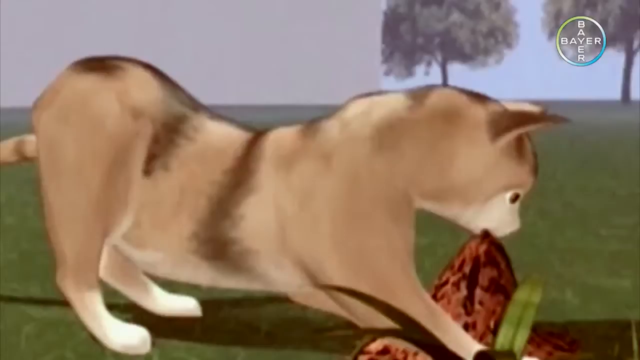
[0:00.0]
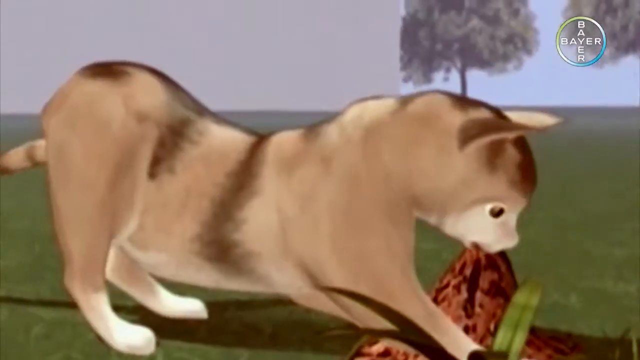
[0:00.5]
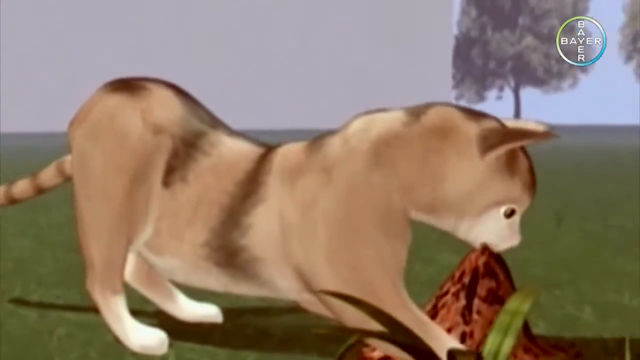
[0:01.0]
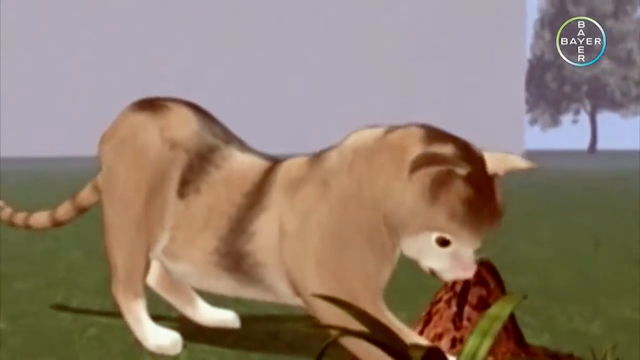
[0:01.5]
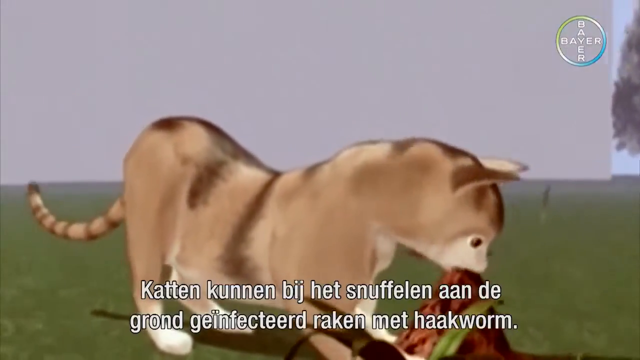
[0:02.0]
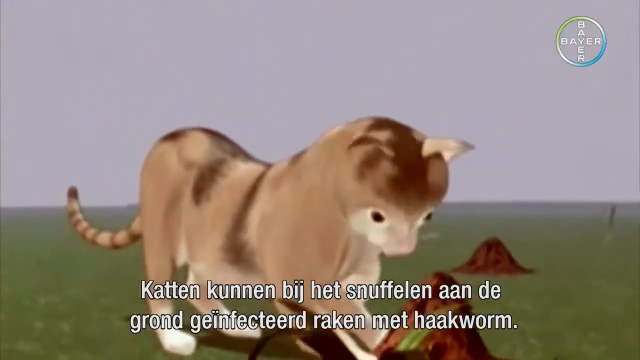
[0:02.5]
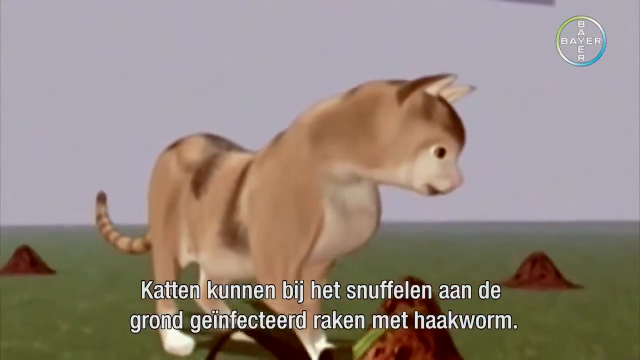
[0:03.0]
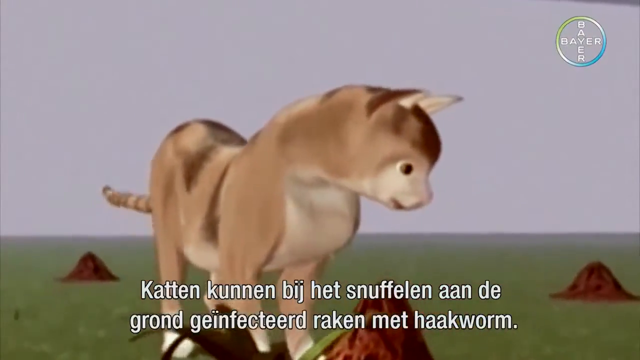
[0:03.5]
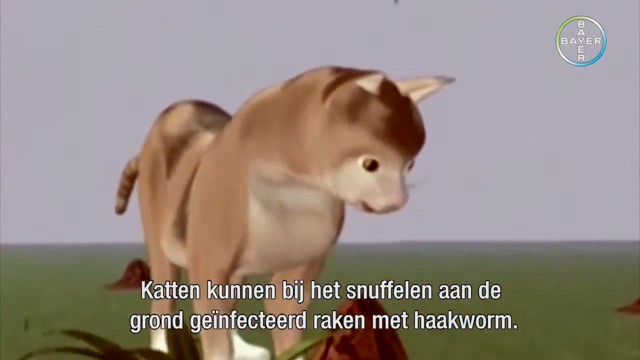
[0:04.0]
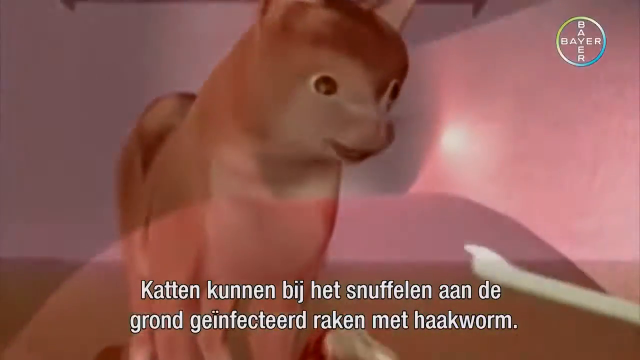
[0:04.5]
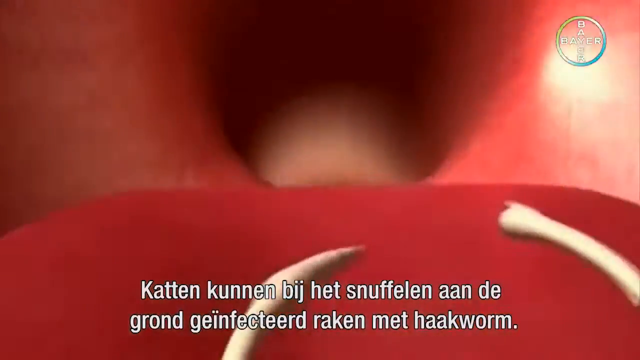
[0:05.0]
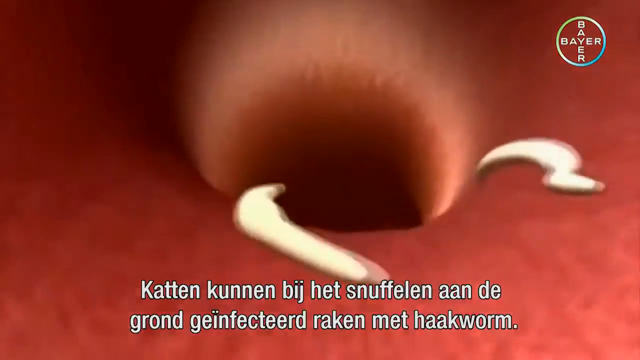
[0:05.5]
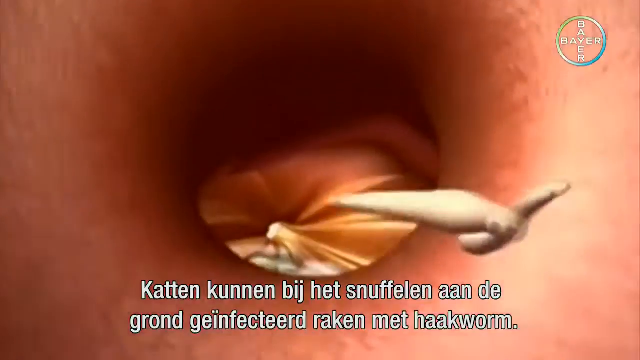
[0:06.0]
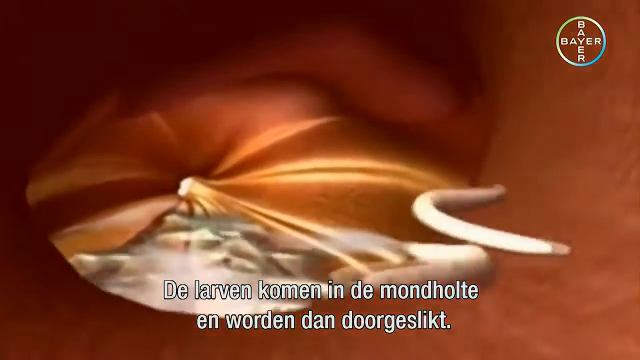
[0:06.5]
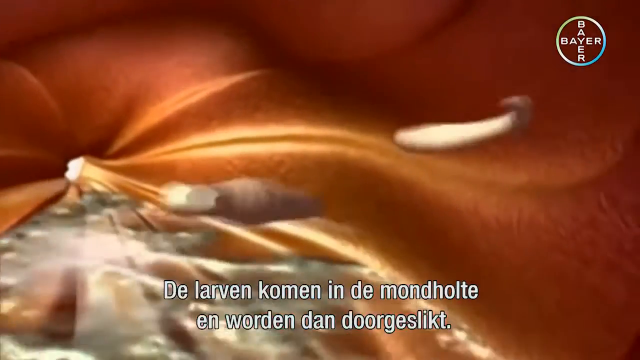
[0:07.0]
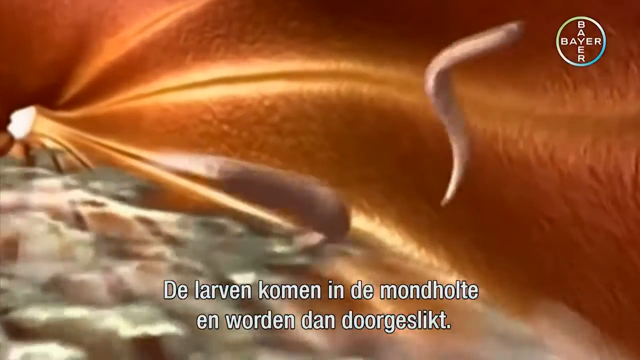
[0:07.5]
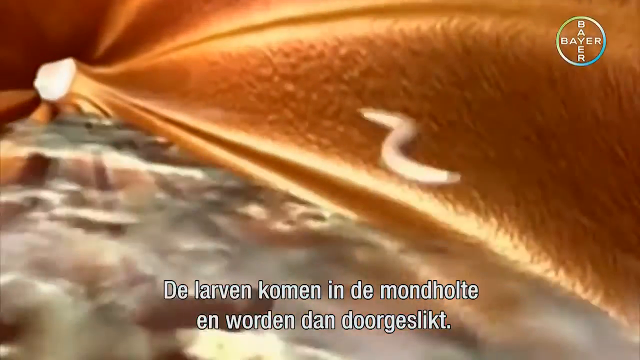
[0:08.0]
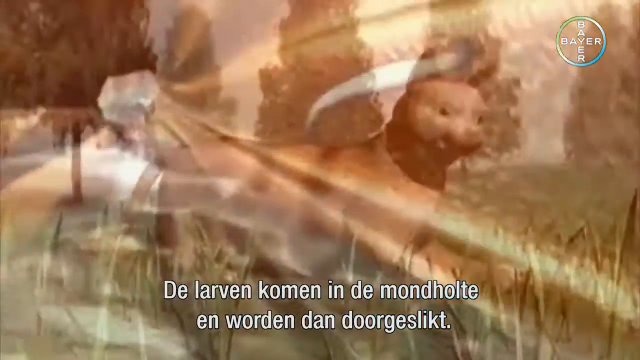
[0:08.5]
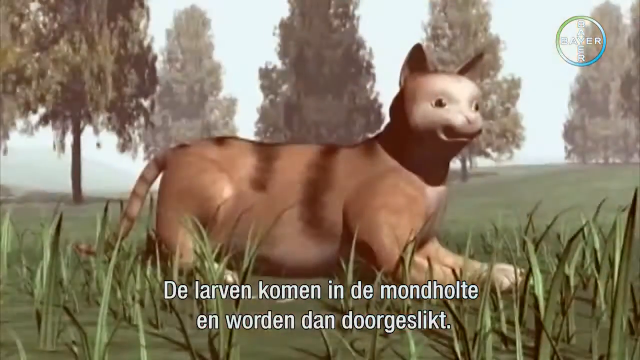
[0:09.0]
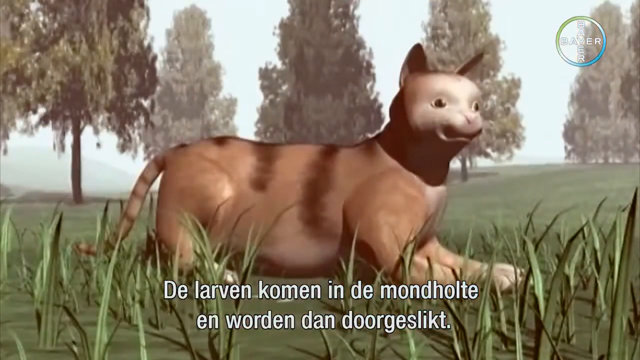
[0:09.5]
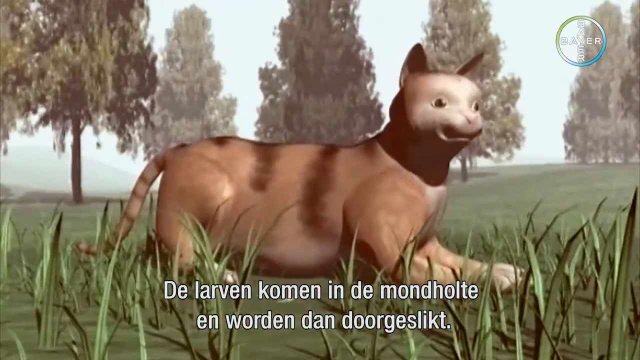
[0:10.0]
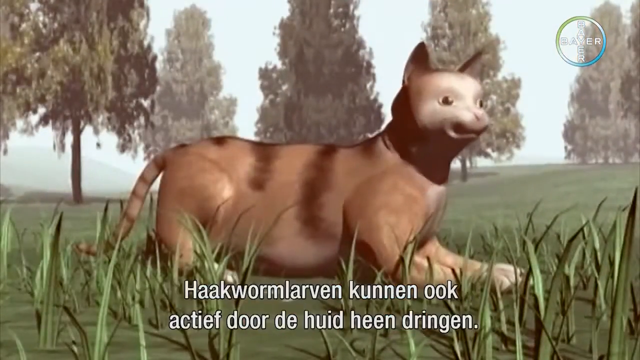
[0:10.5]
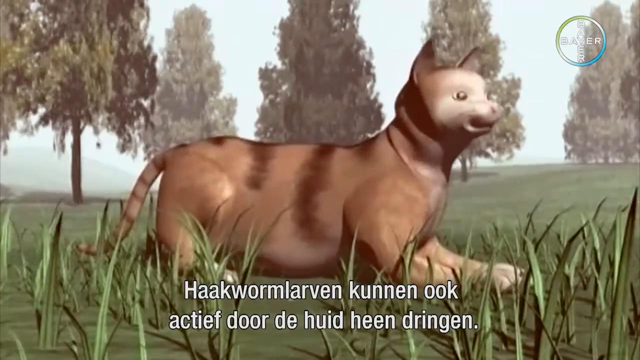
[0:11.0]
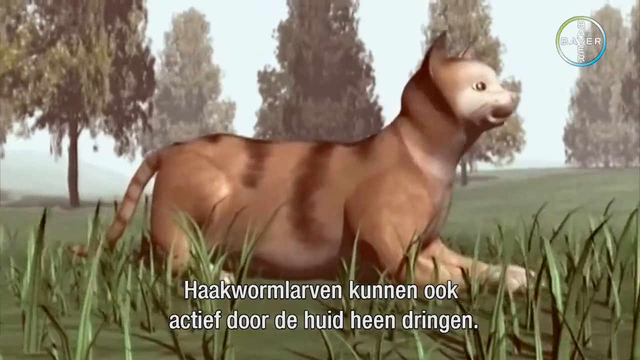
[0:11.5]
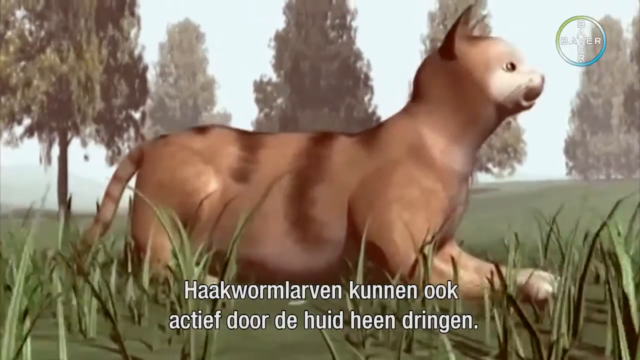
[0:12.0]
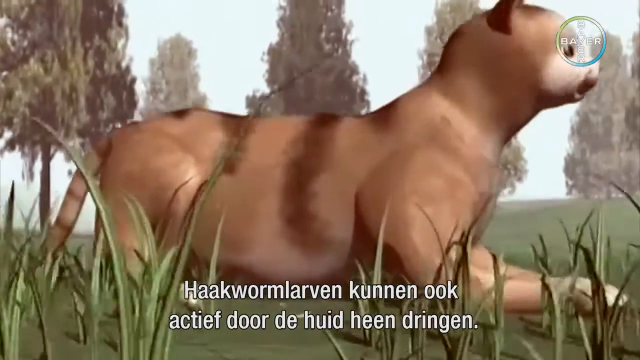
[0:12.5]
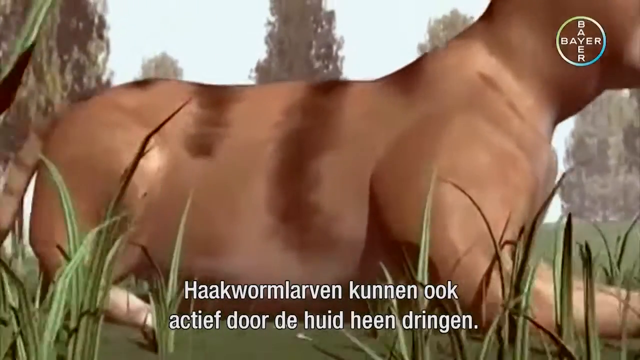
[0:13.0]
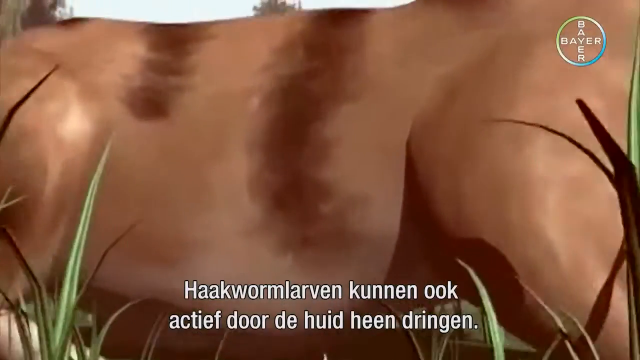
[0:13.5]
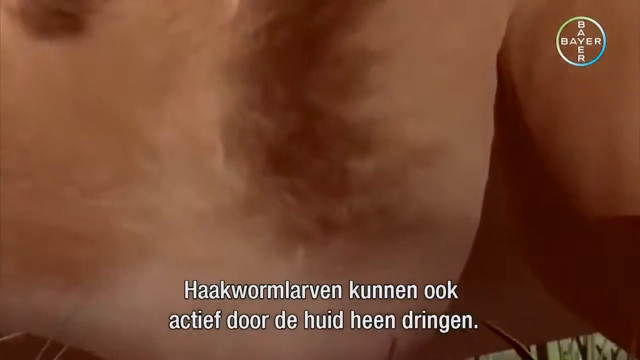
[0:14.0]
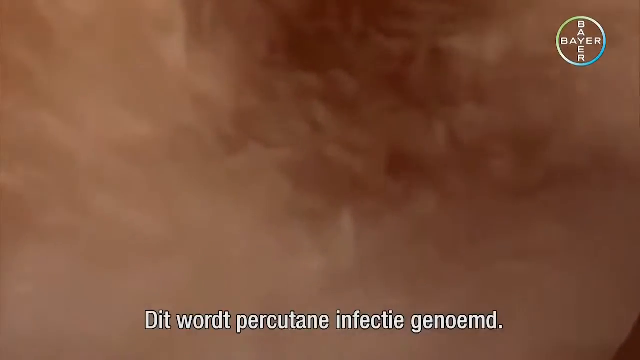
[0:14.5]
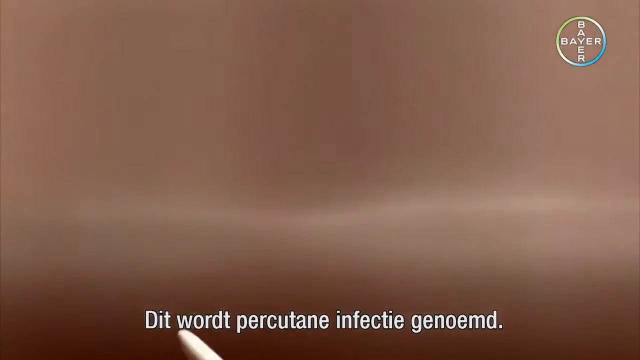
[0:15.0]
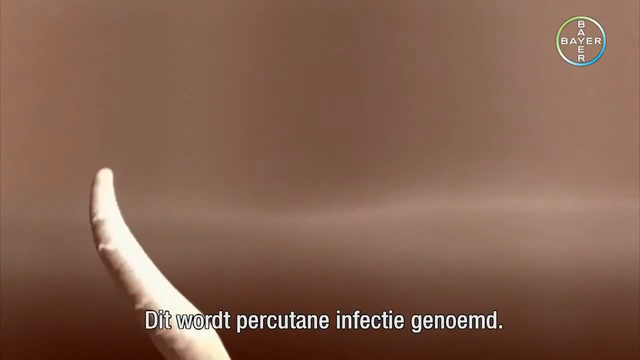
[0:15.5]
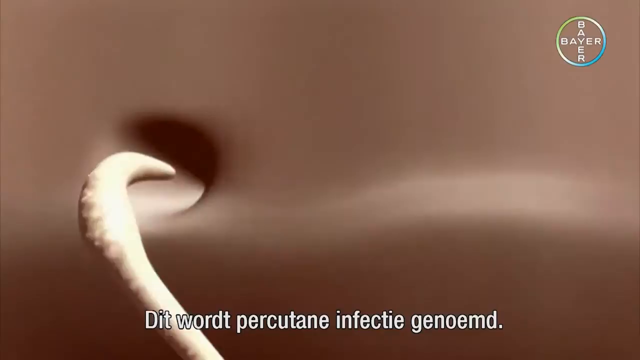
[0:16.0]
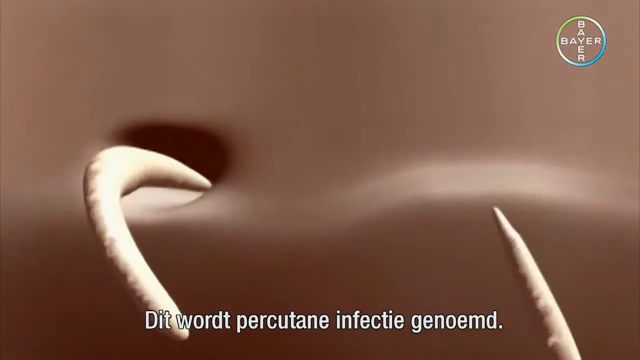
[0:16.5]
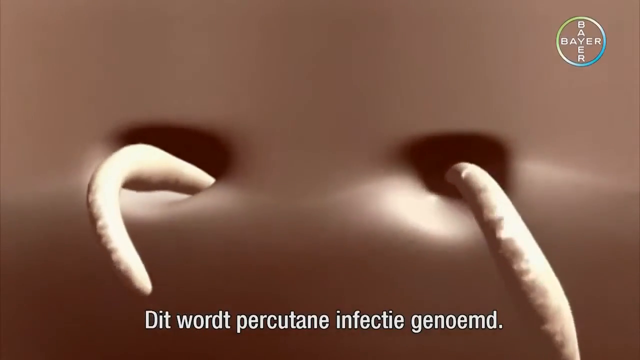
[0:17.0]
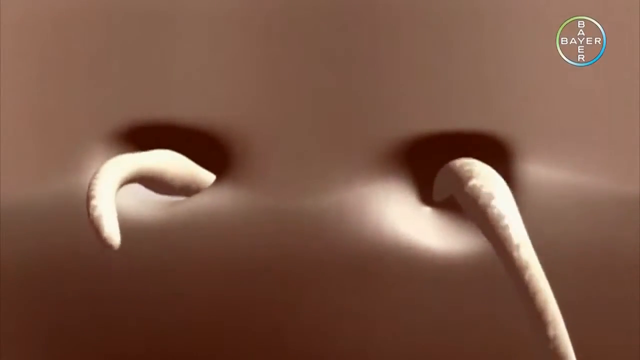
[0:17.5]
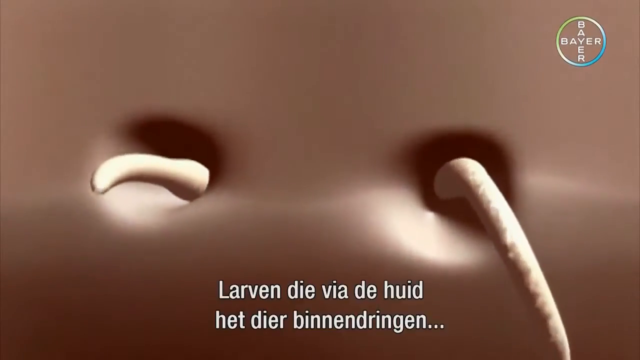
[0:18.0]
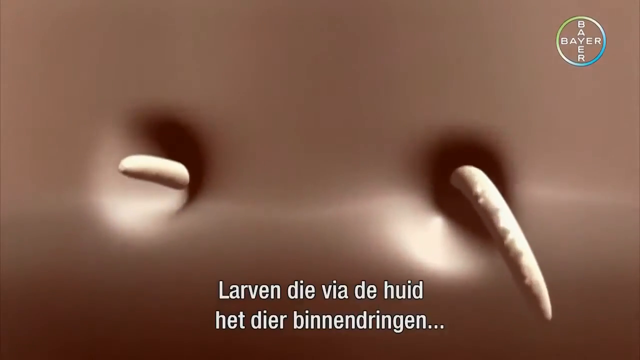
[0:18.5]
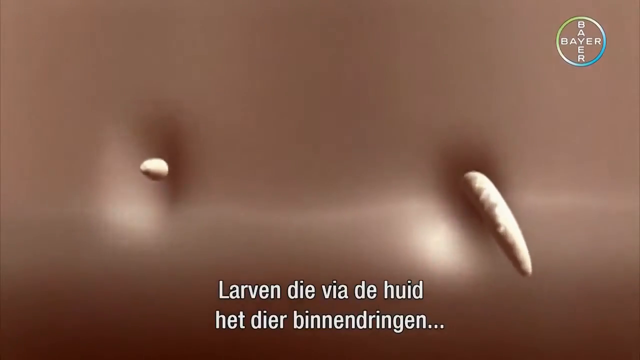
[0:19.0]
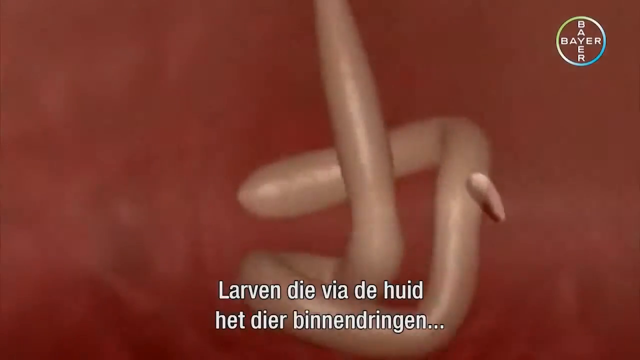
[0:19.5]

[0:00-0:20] The video opens on an animated animal, possibly a cat, that looks like it is getting into something on the ground. In the upper right corner is a circle with the word "Bayer" appearing twice, the two words connecting across each other. Words in white letters are written at the bottom of the screen. The video then shows a depiction of the inside of the cat's mouth, as though traveling down it, with white organisms traveling through the tunnels of the mouth and moving into a deeper area. It cuts back to the cat, which is in an outdoor area, then returns to the white organisms, which go into two different areas and appear to be burying themselves there.